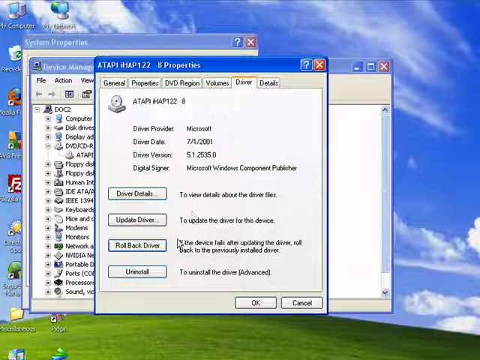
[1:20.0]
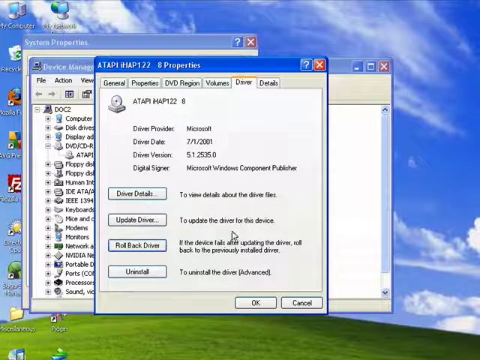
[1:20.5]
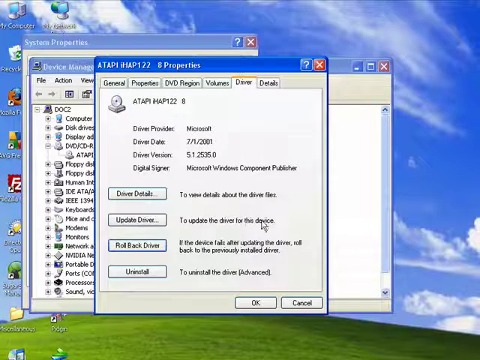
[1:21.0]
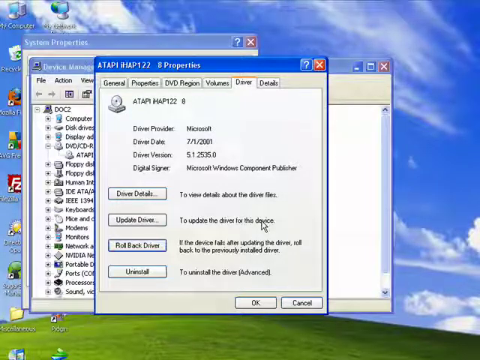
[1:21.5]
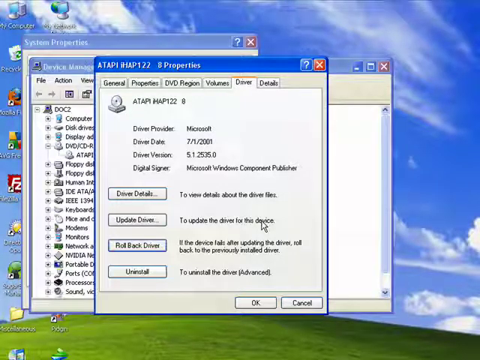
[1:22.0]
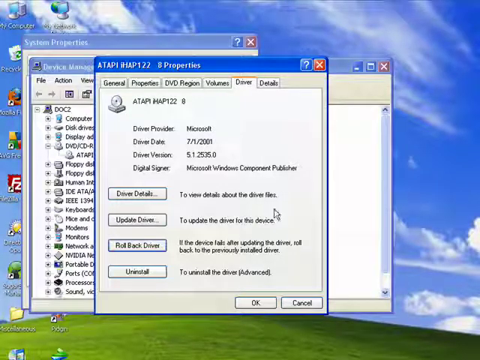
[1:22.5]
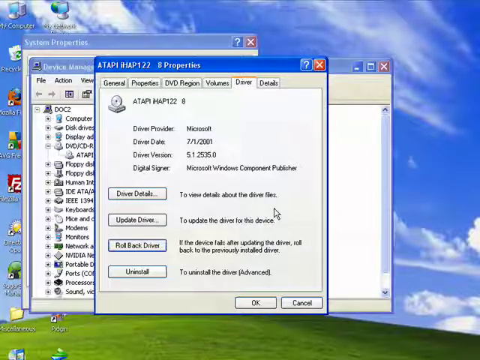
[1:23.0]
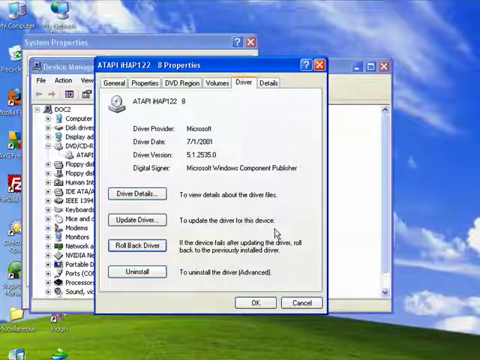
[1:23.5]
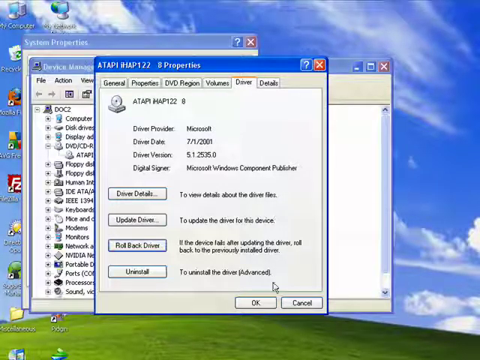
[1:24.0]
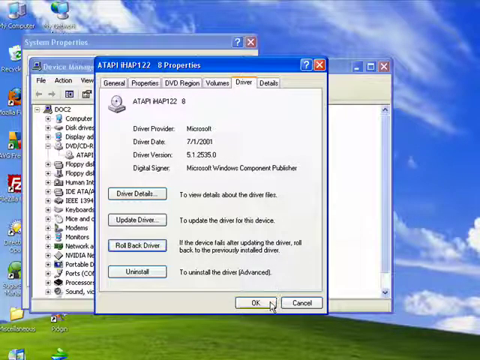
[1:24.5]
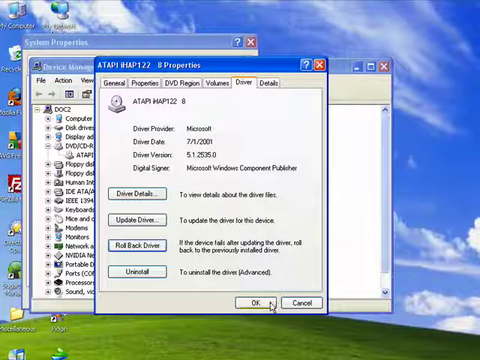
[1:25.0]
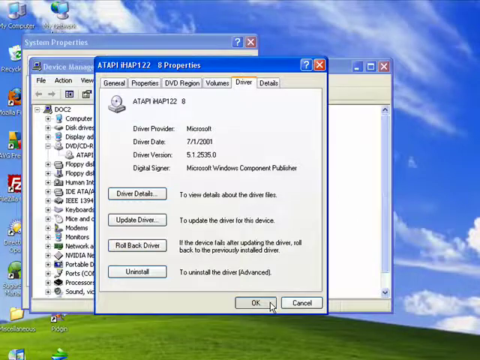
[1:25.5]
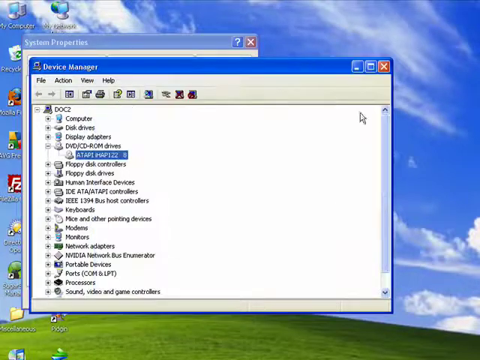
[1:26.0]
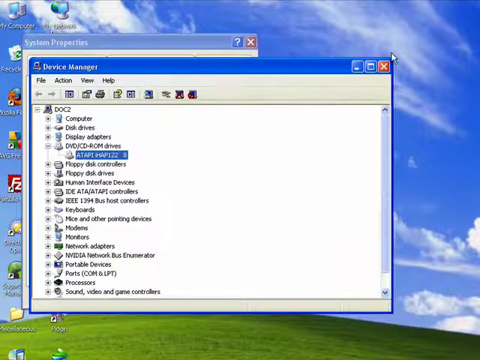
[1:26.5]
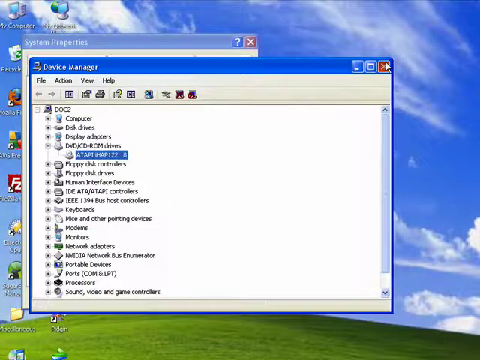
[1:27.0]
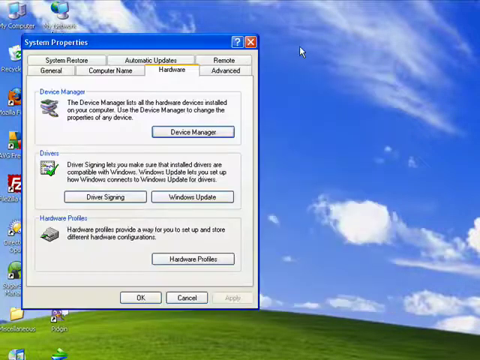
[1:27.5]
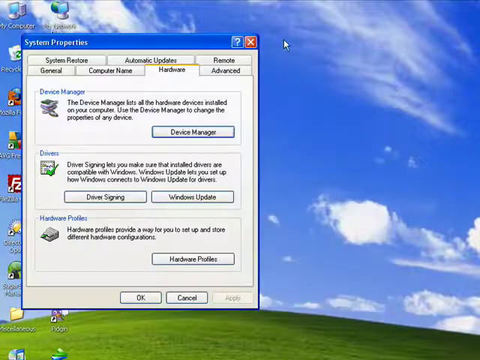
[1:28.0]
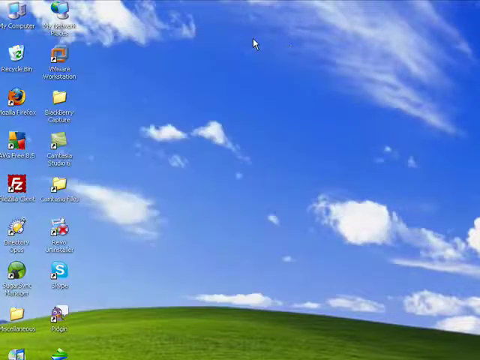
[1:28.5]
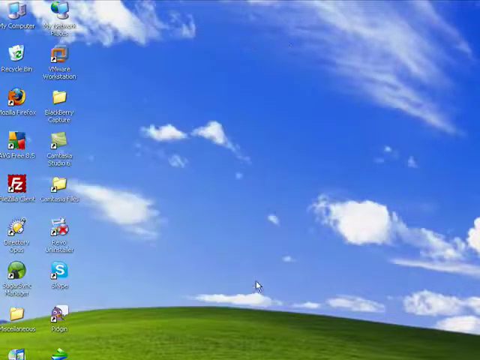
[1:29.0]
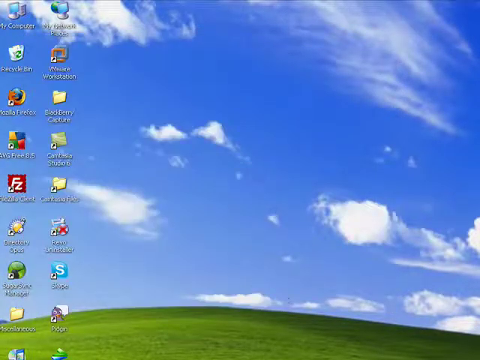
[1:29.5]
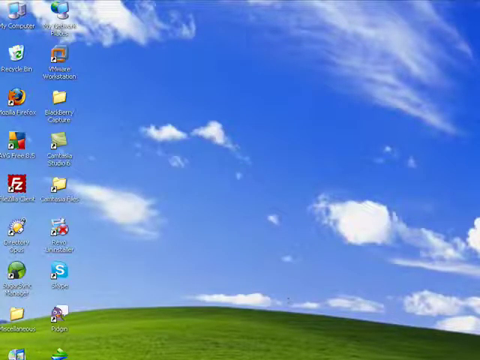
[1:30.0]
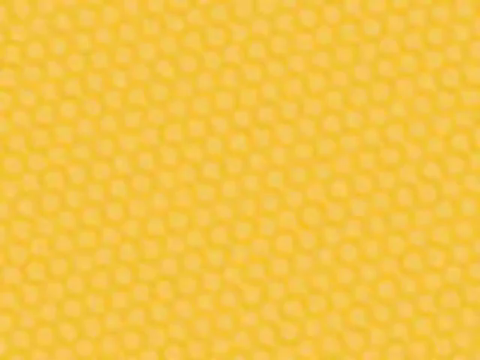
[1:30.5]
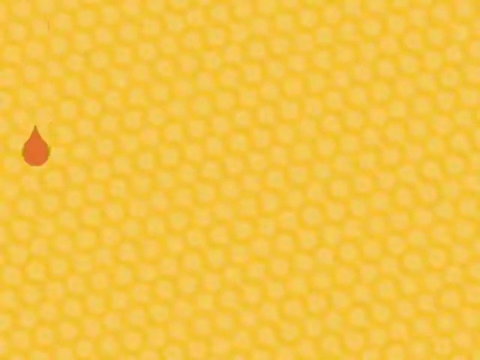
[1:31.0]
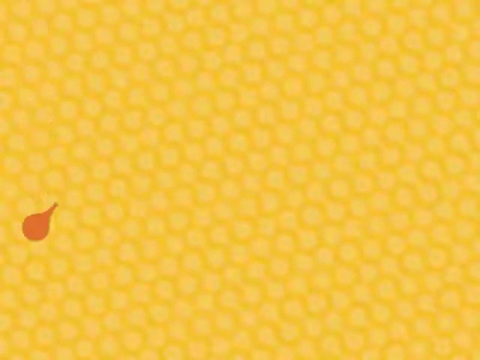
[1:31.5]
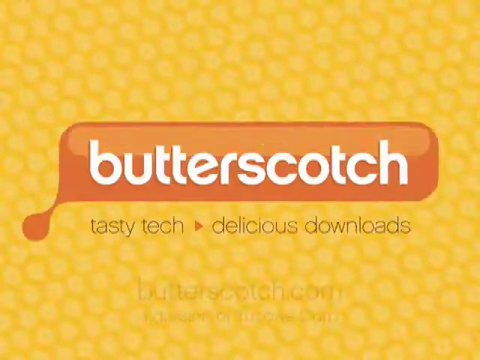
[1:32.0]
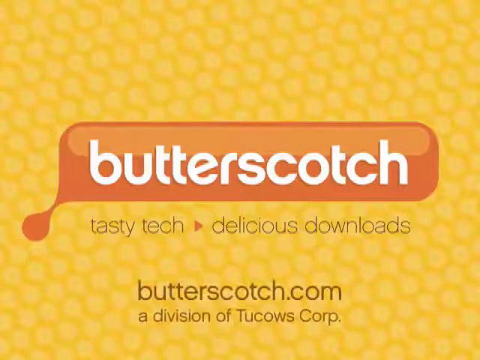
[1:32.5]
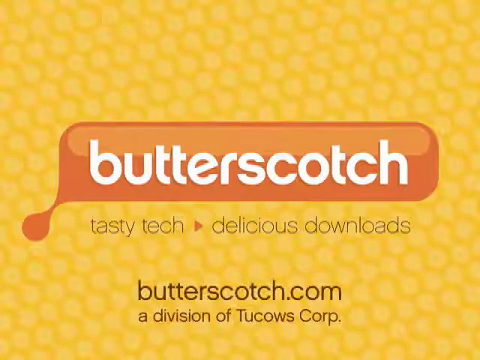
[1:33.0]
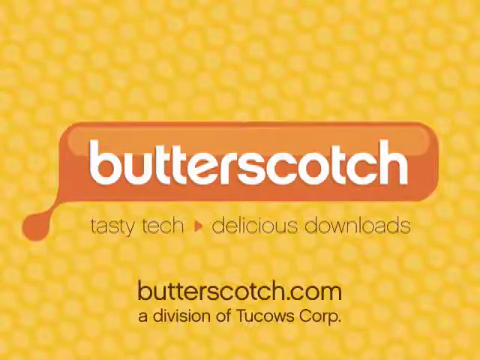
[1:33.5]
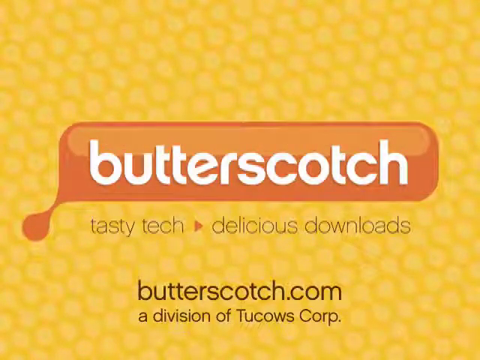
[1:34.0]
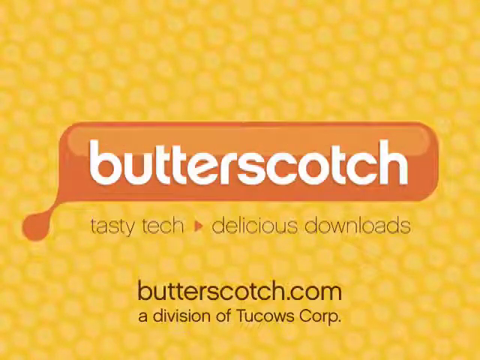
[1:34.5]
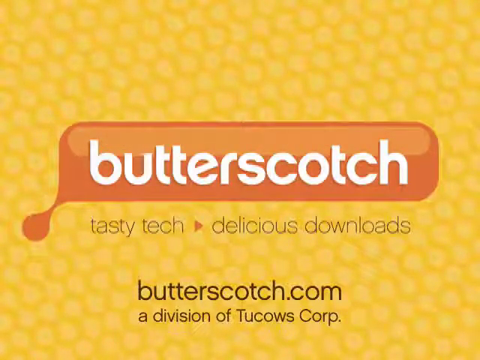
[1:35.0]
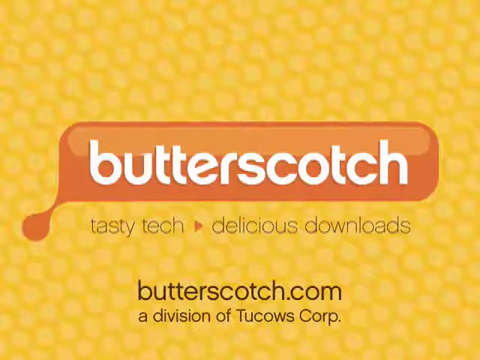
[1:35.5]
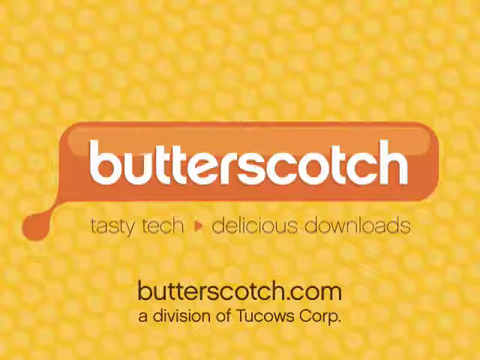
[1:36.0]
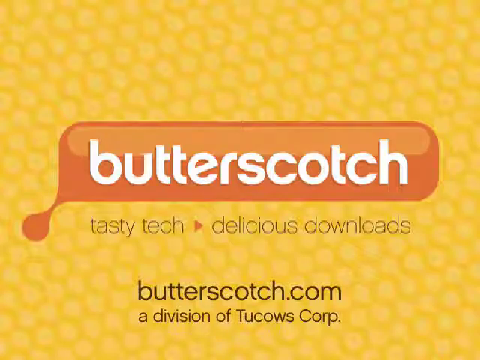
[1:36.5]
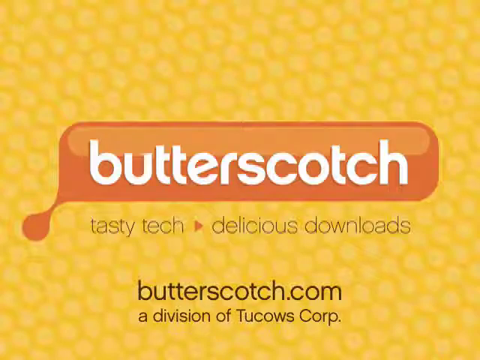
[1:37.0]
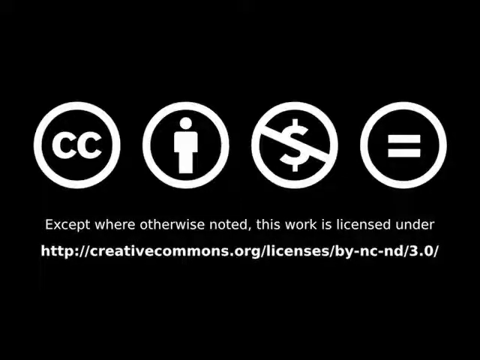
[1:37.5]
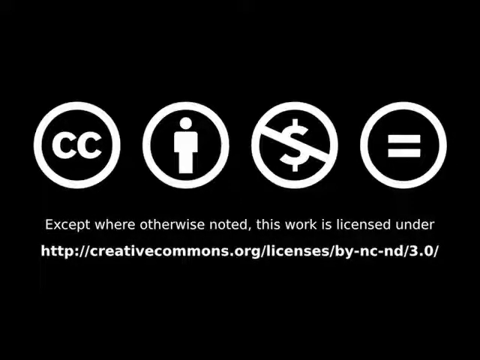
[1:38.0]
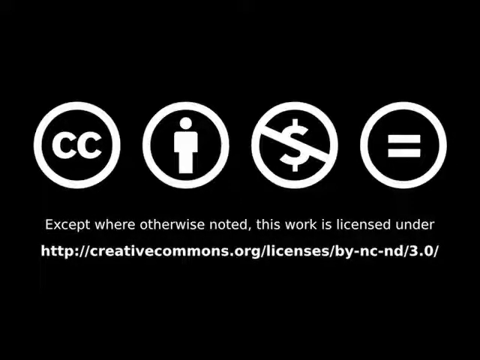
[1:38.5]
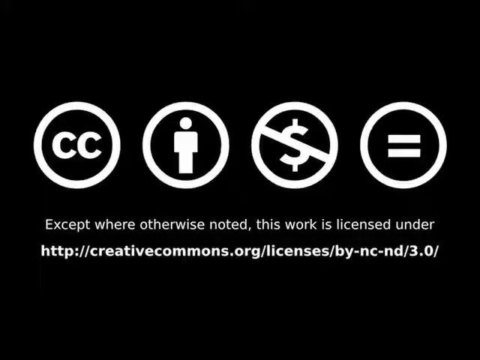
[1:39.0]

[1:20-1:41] On the standard Microsoft Windows home screen, the My Computer icon at the top left is right-clicked, bringing up System Properties. Device Manager is clicked and opens in its own window over the home screen. The DVD-CD-ROM hardware device is selected, and the Atapi DVD-CD-ROM device driver is clicked, bringing up the Atapi driver screen with the choices Driver Details, Update Driver, Roll Back Driver and Uninstall Driver. Roll Back Driver is clicked, leading to another pop-up that says "do you want to proceed?" No is clicked, and the sub-windows are closed. The video goes to the yellow honeycomb slide, then to a final page with icons: "cc," a human stick figure, a dollar sign with a line through it, and an equal sign. It says "except for others noted this work is licensed under" followed by a website URL.